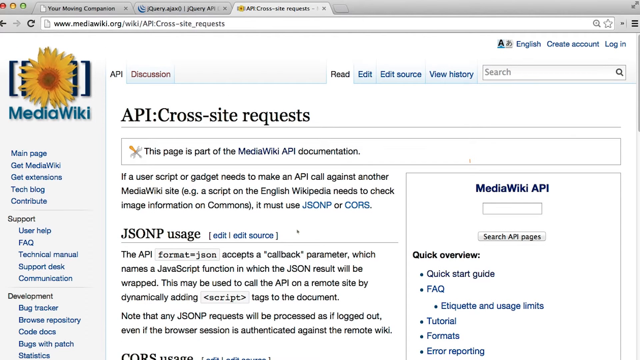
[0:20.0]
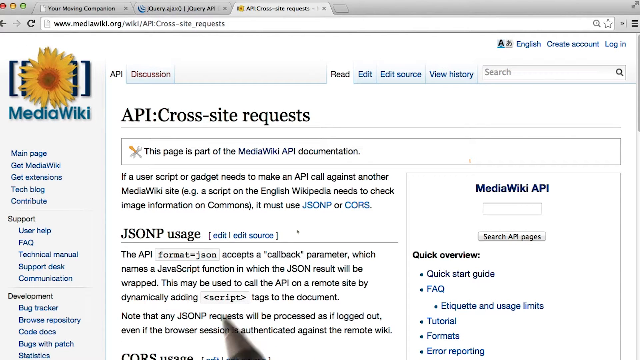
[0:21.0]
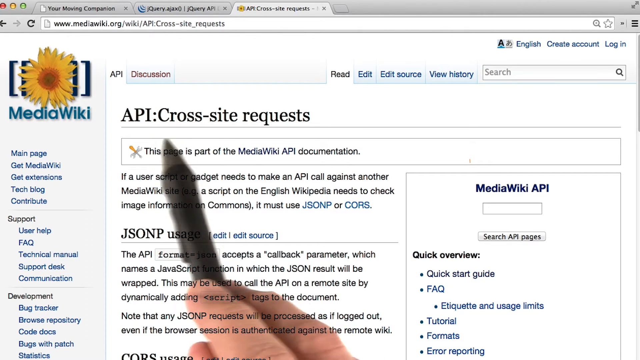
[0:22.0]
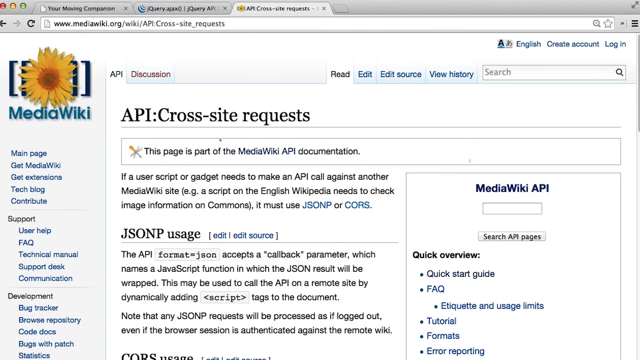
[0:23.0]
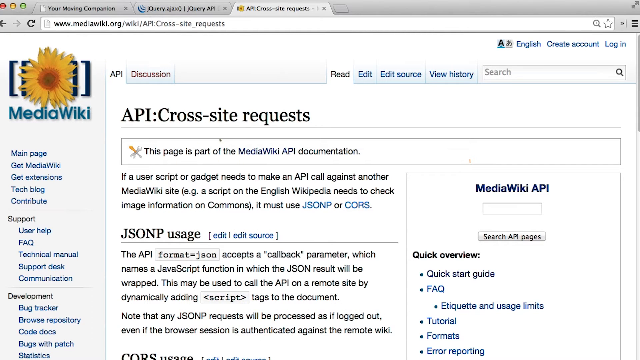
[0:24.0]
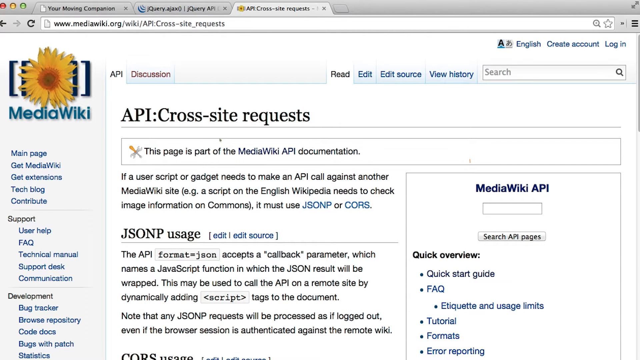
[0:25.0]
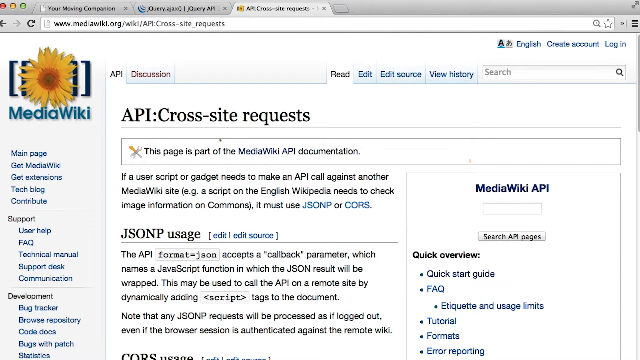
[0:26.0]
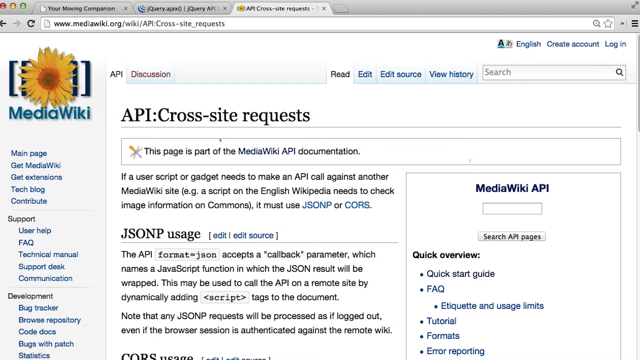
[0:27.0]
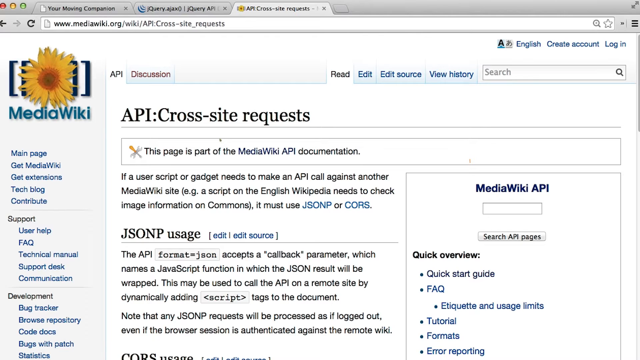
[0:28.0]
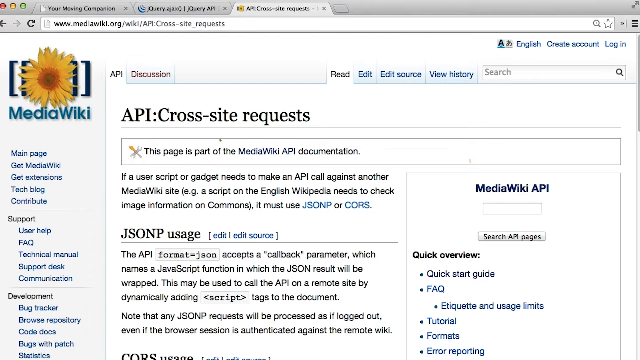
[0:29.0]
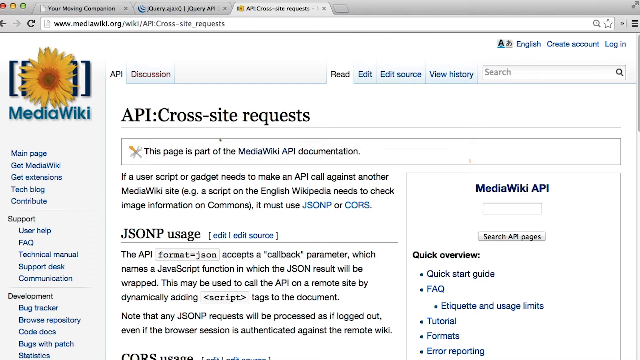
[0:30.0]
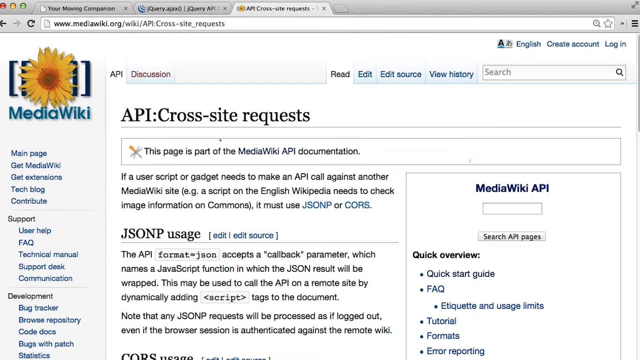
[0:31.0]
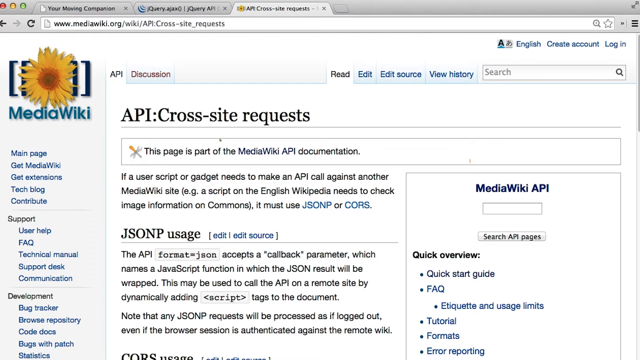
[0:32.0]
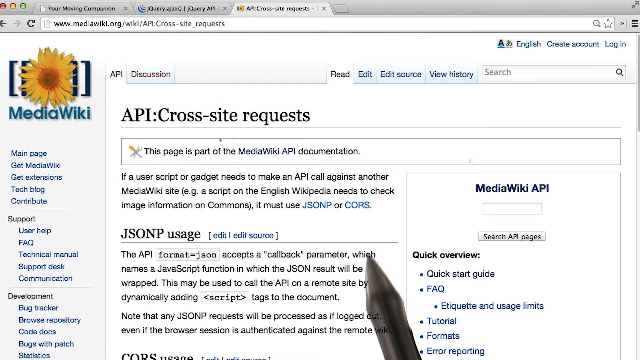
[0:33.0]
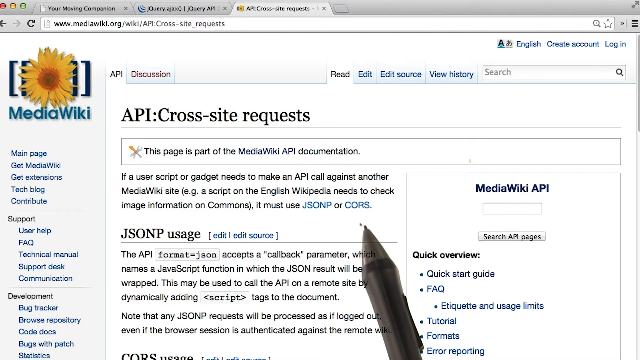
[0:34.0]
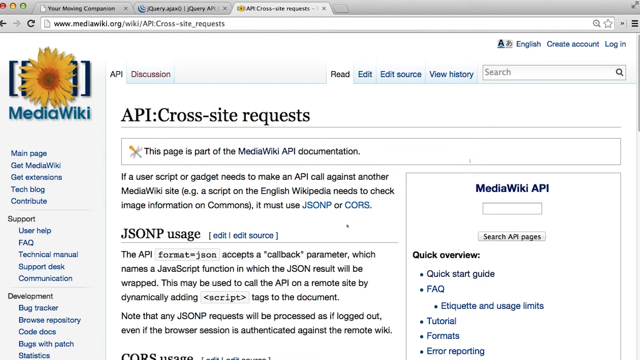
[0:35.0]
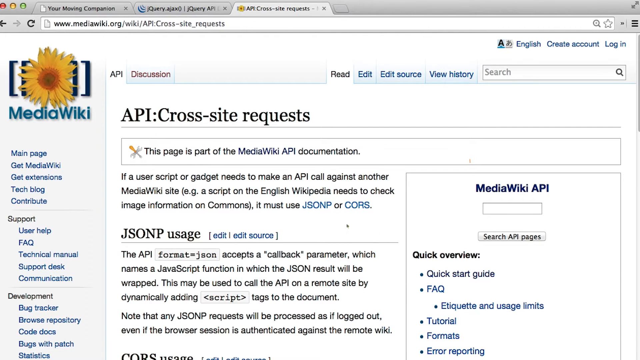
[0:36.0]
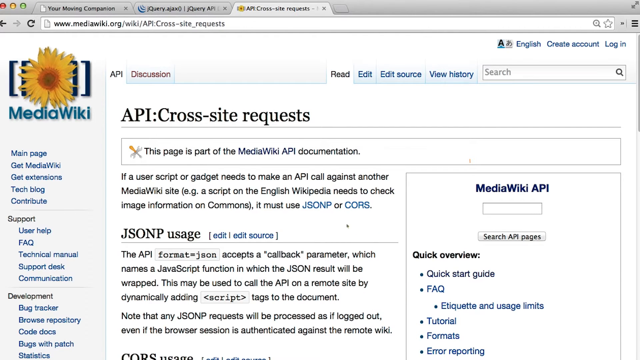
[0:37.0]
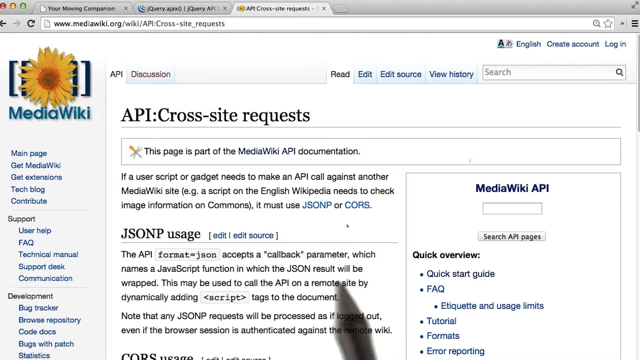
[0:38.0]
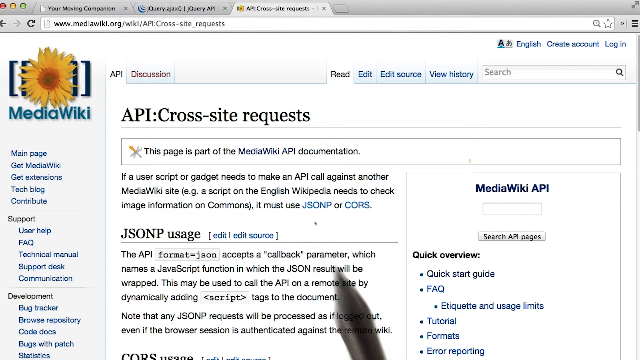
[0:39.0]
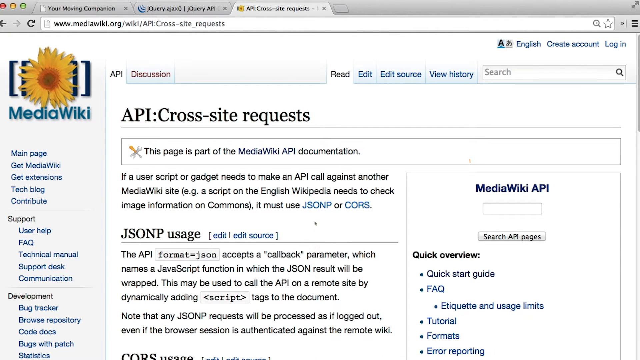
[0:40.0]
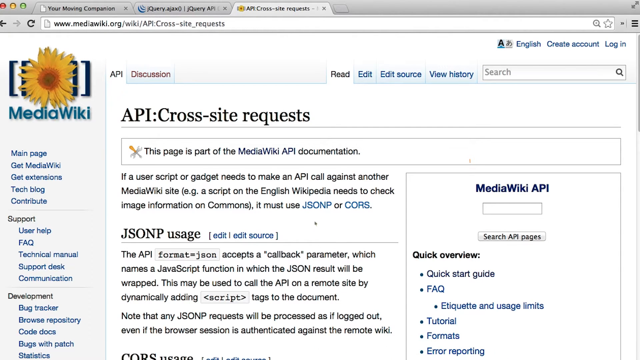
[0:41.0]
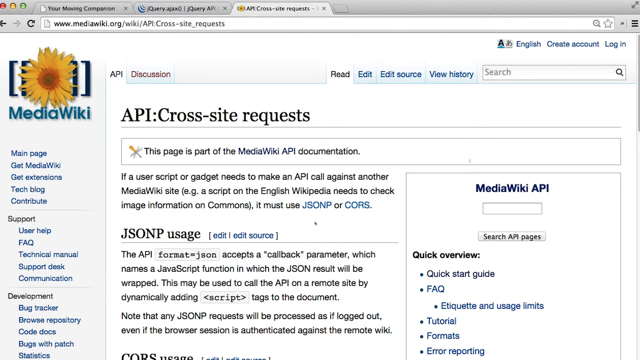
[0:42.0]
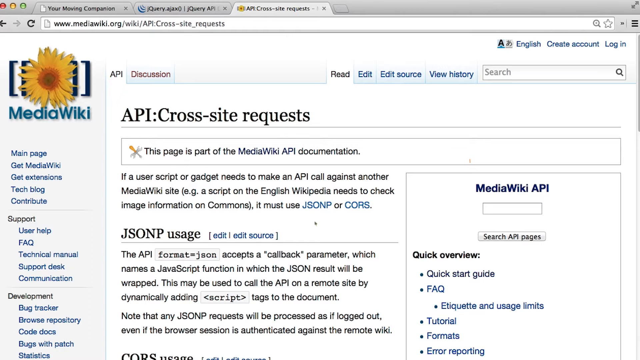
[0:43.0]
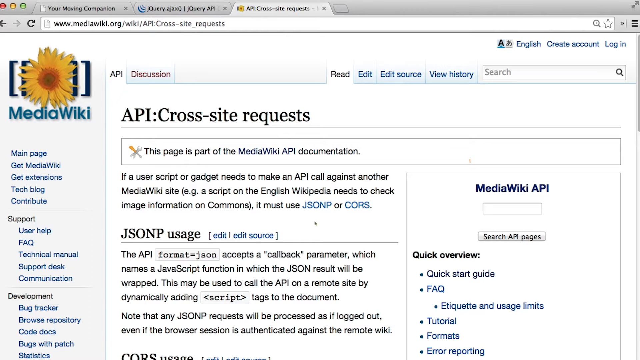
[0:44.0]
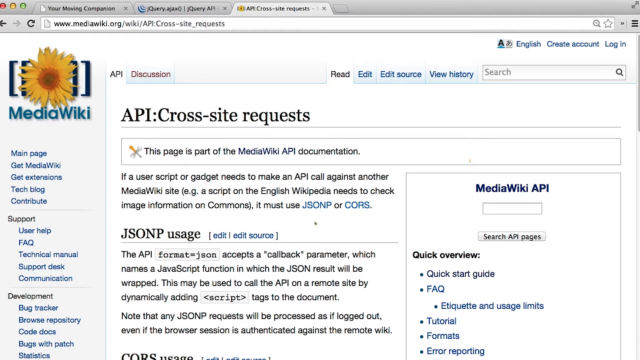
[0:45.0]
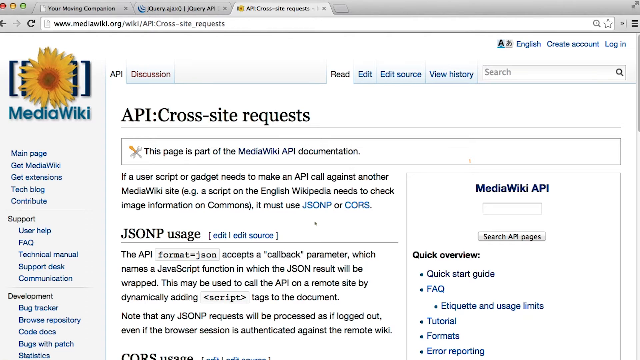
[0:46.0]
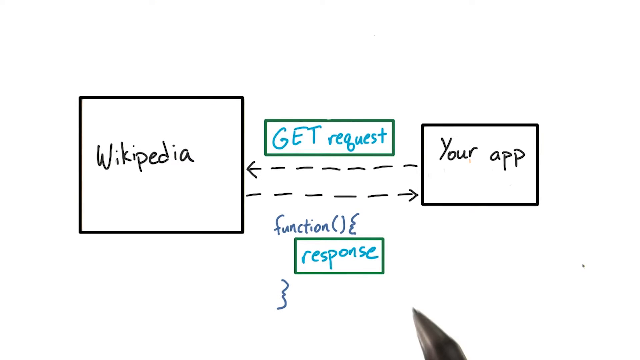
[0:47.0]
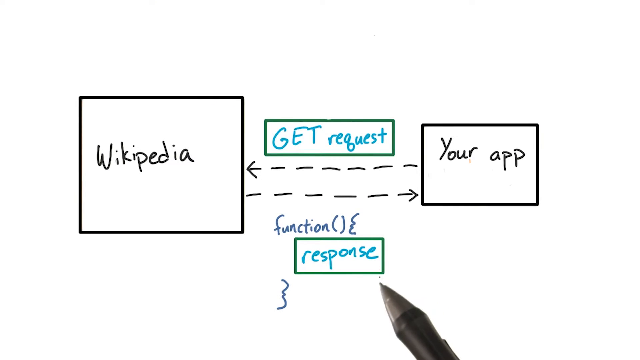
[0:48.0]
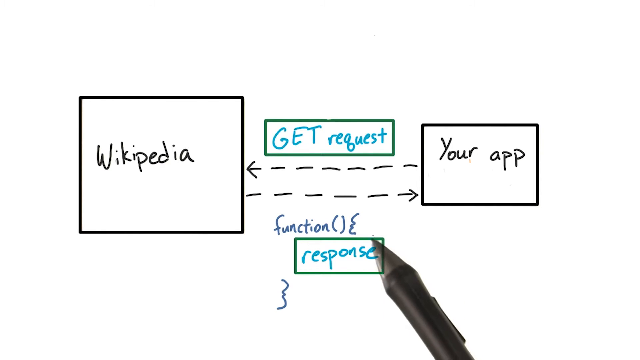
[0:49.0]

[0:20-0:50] On a computer, a page reads "MediaWiki." Somebody's right hand points out the API cross-site request with a pencil. The page shows JSONP usage. The person makes little dots with the pencil on the page: one dot appears and then disappears, and the pencil comes back to make another dot. The page changes to another page, where the pencil enters the same way and makes a dot there as well. The view returns to the MediaWiki page, where the person makes random dots all over the page, above and below, and on another page as well. A diagram appears, looking like a rectangle with other shapes running off it, connected by a drawn line, and the hand with the pencil keeps coming in to make random dots.